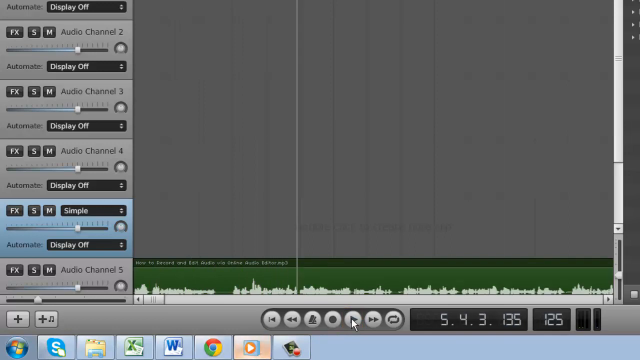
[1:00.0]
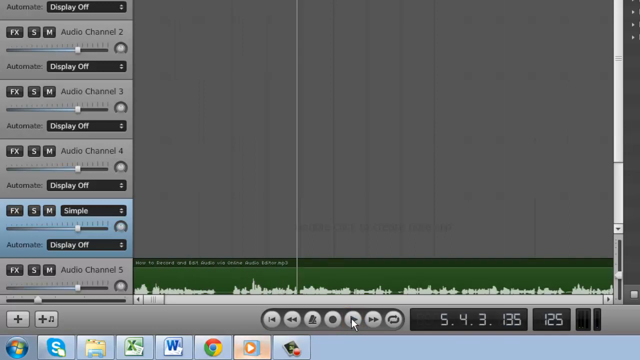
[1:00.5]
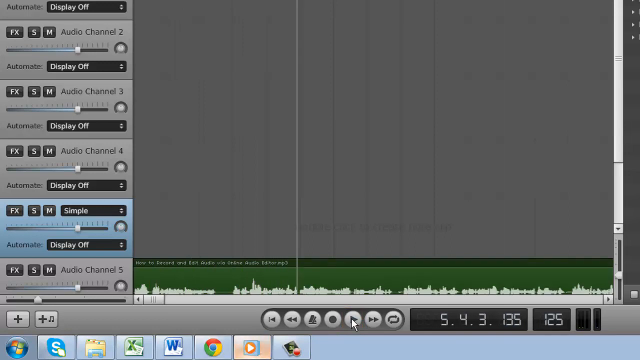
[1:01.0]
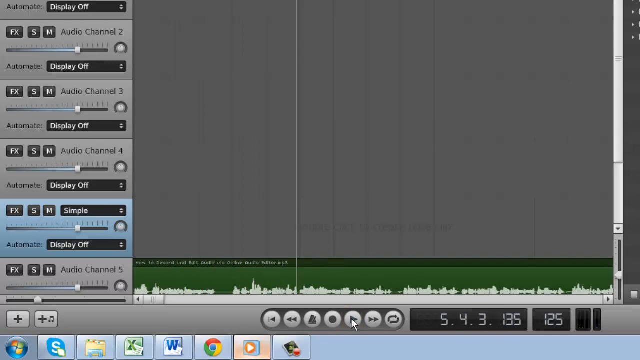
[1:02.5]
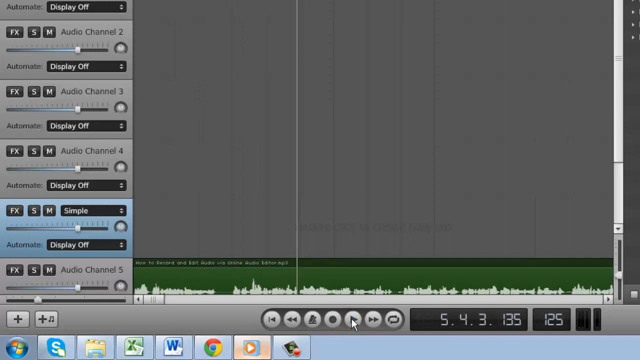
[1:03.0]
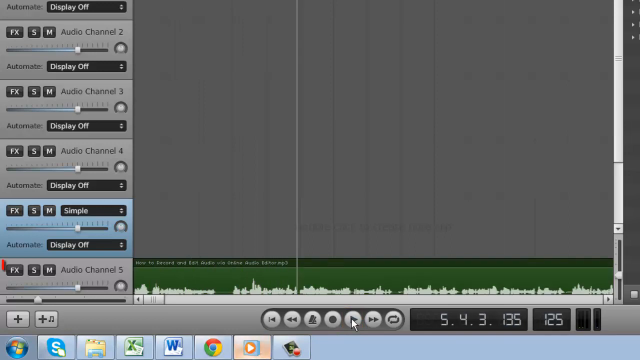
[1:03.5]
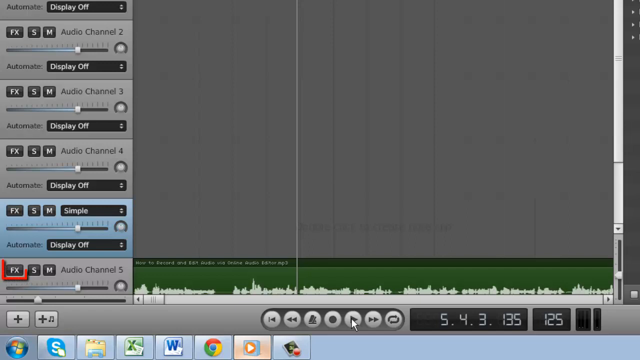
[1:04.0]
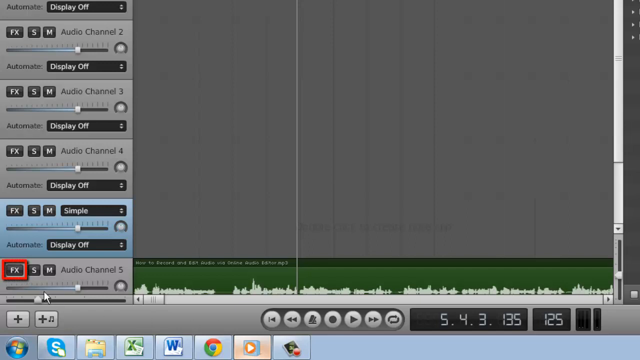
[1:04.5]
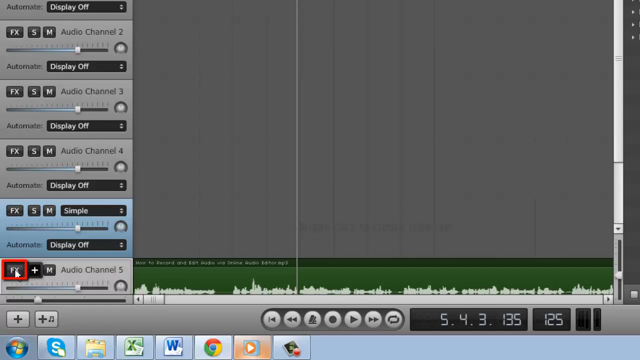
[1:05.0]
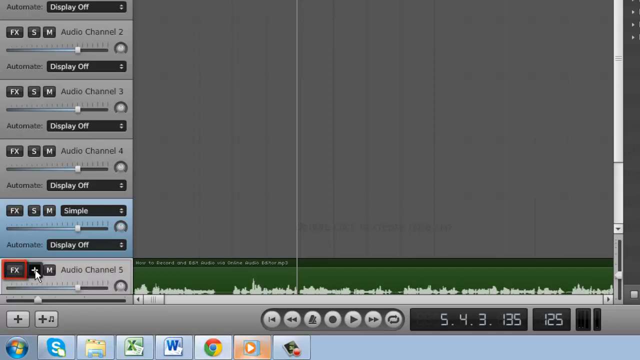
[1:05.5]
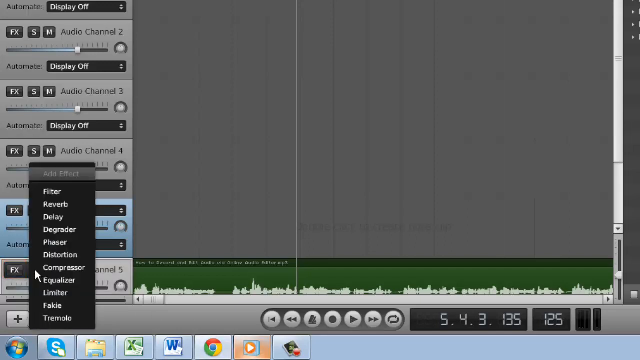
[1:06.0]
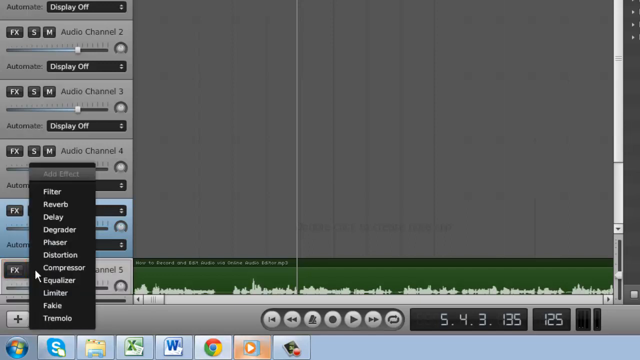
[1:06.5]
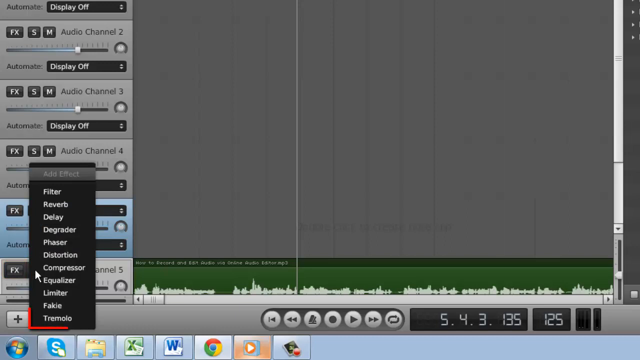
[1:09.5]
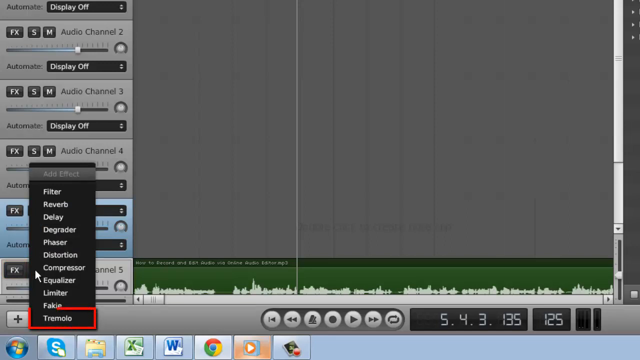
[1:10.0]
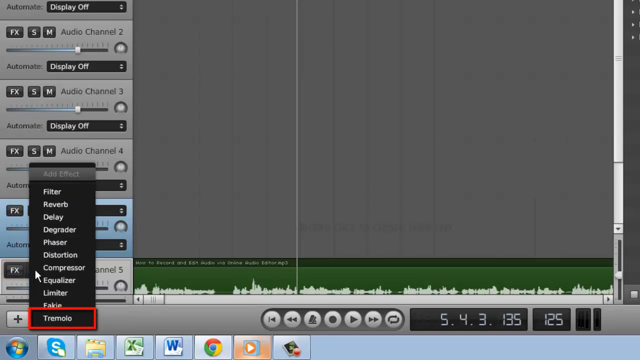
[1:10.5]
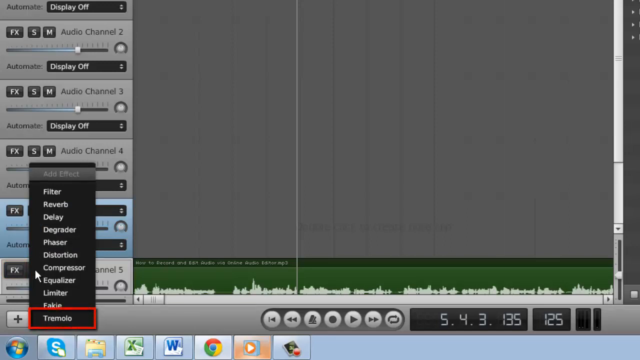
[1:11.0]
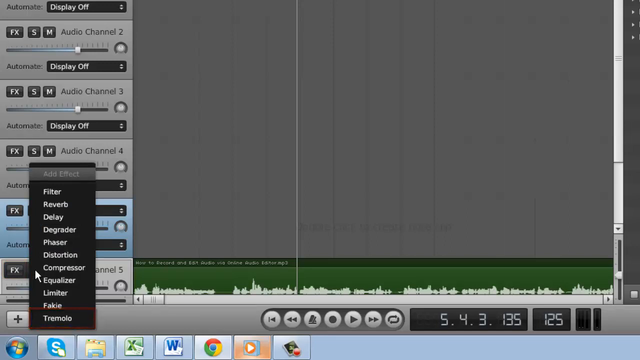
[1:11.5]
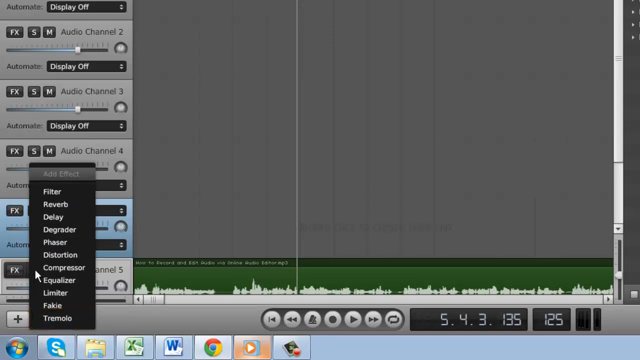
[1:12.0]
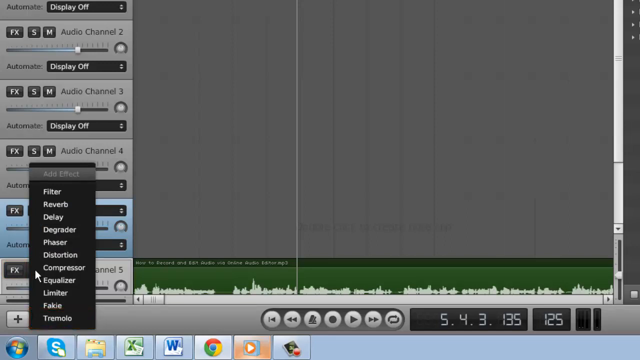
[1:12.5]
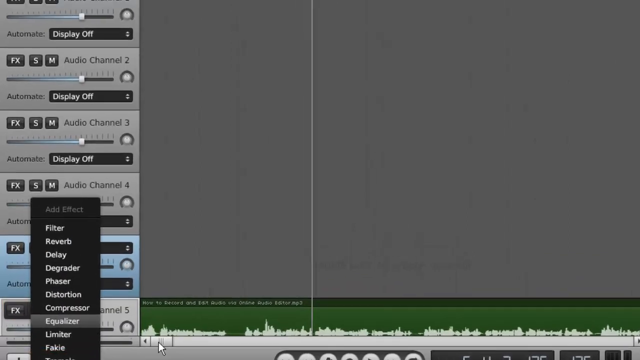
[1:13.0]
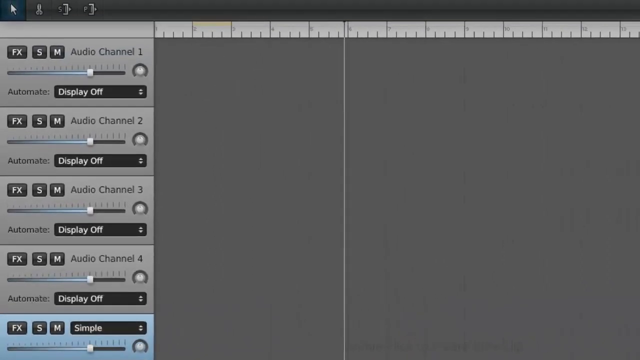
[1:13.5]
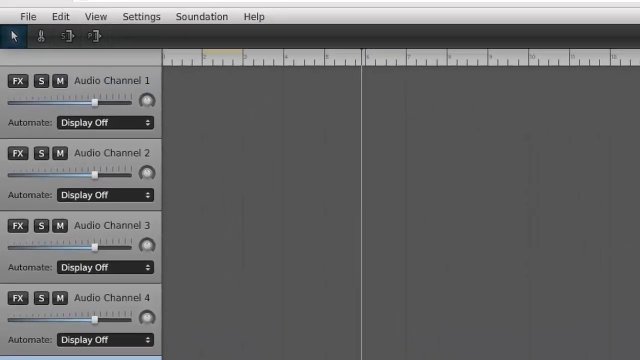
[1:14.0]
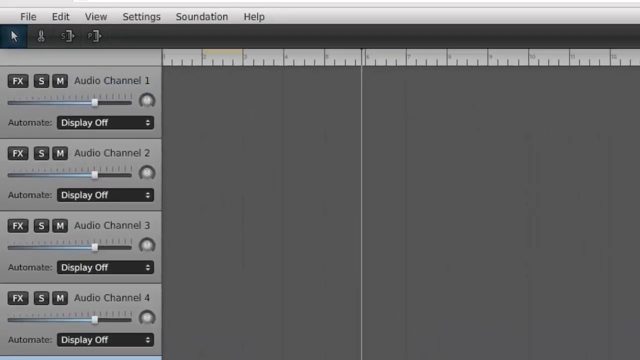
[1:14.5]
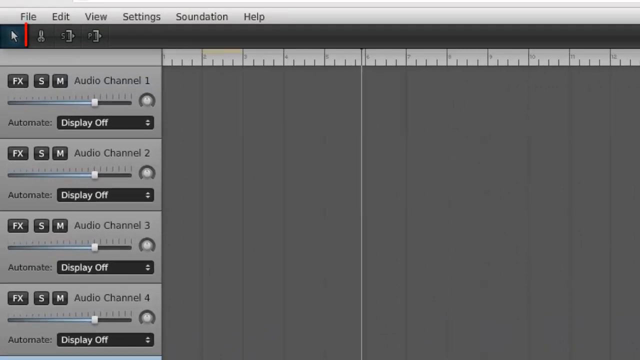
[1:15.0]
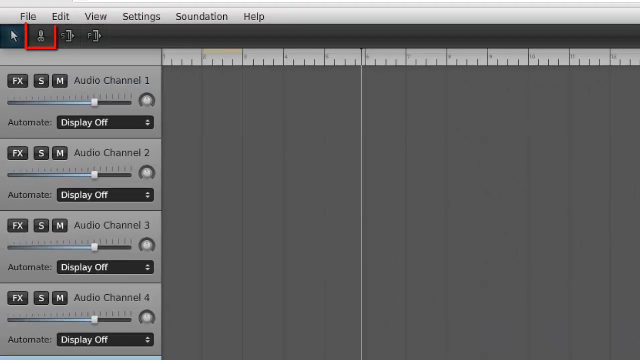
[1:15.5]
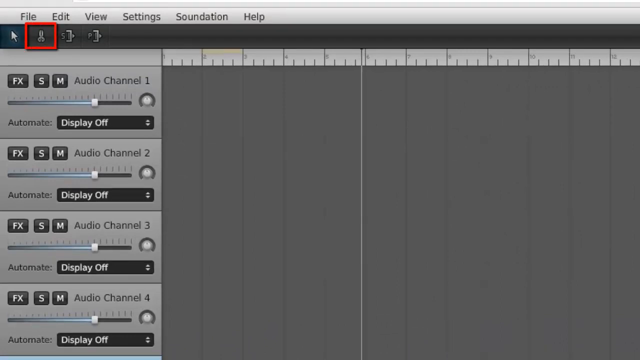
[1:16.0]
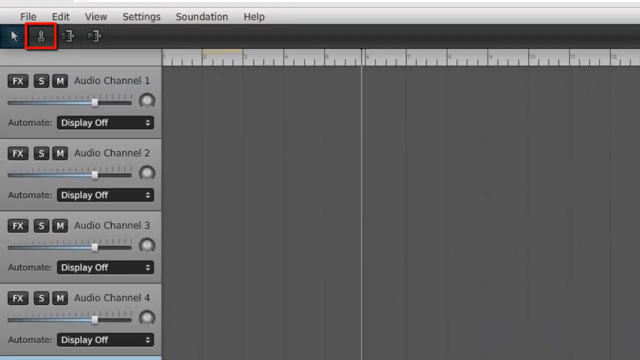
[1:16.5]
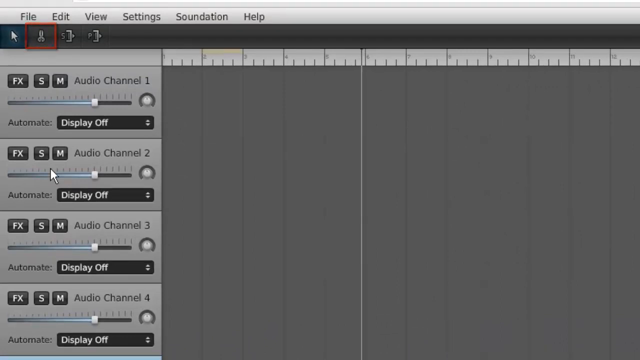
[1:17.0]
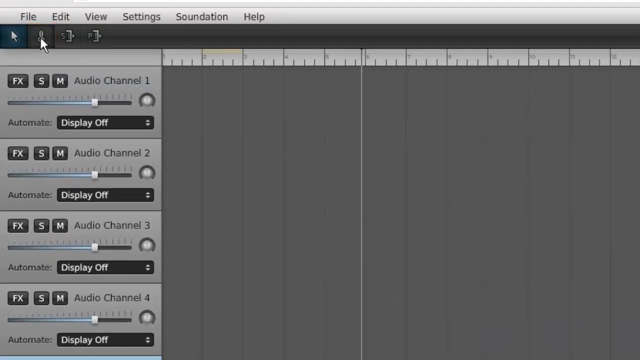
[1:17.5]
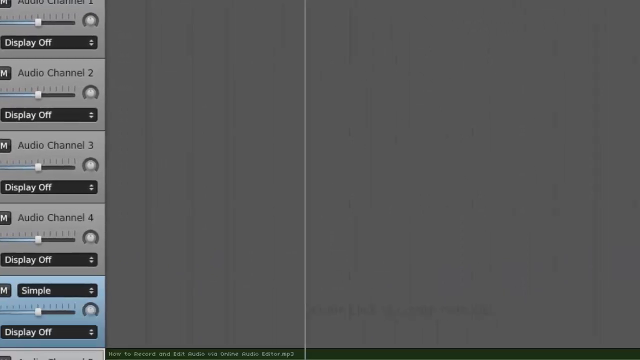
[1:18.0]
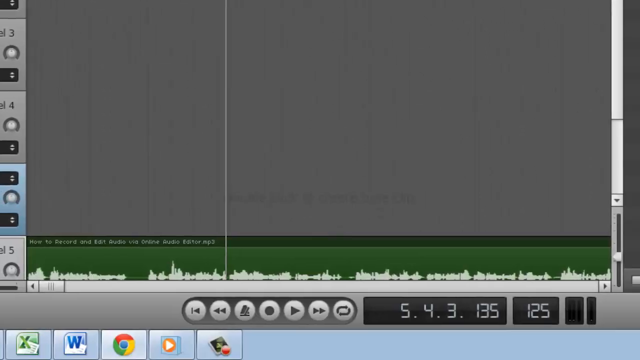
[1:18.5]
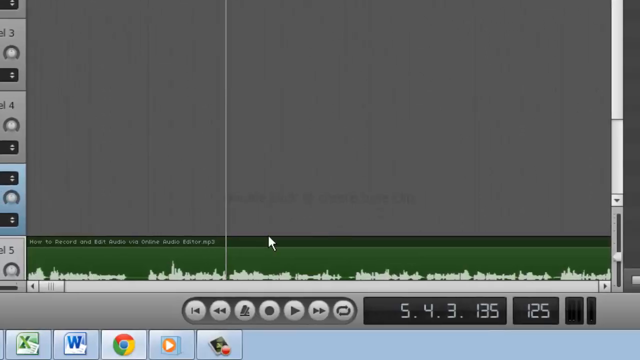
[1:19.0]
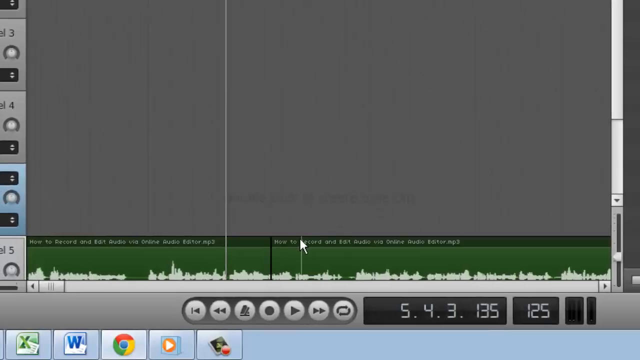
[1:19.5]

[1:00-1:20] In the web page's built-in audio mixing program, Audio Channel 5 is playing; it is the only channel that has an actual audio file. The audio file appears green with white sound bars. A red box then surrounds one of the buttons in the Audio Channel 5 mixing section, a black button that reads "FX." The user left-clicks on FX, which pops up a plus sign to its right, and then clicks the plus sign. This opens a menu full of various audio effects. The user moves the mouse to an audio effect named "Tremolo," which is also surrounded by the red box, and clicks it. The screen then zooms in toward the top left of the program and boxes a graphic that looks like a pair of scissors. The user clicks on it and then clicks on multiple sections of the audio file, which causes black bars to appear in the center.